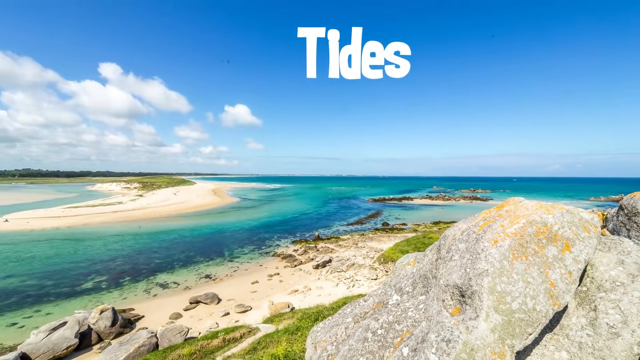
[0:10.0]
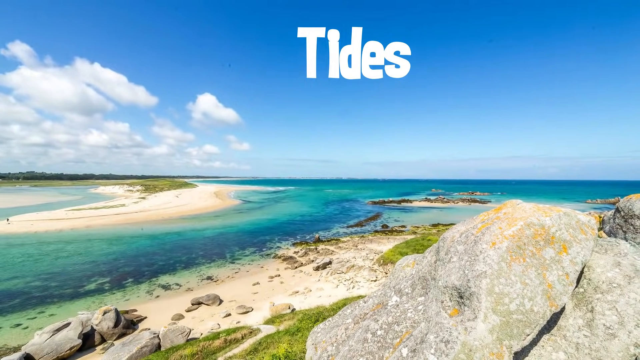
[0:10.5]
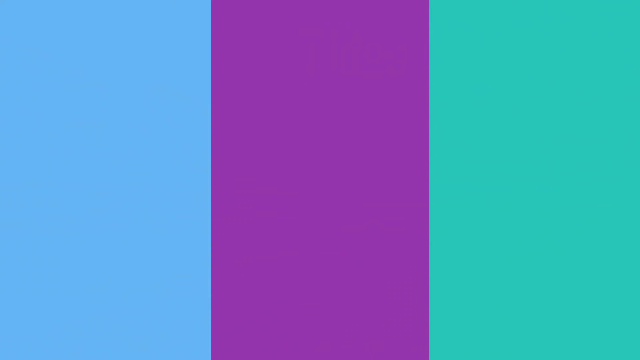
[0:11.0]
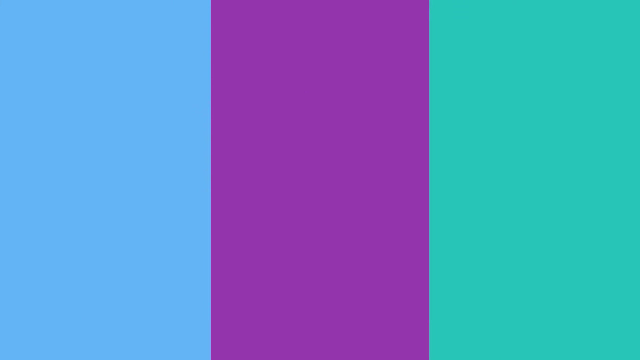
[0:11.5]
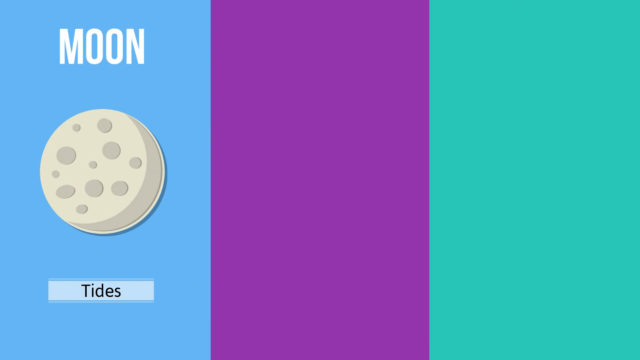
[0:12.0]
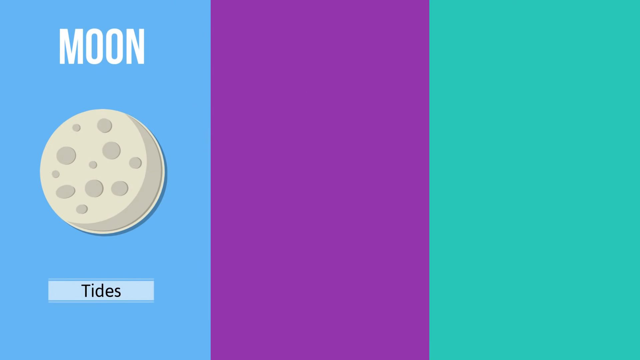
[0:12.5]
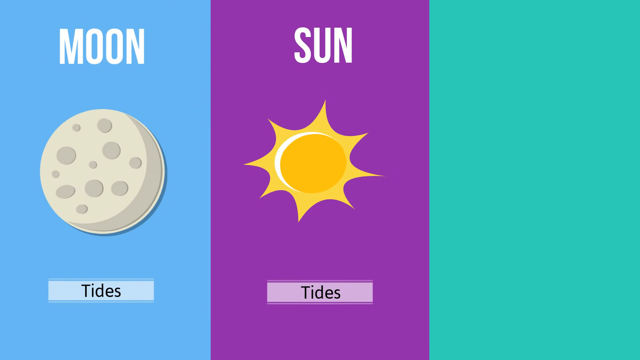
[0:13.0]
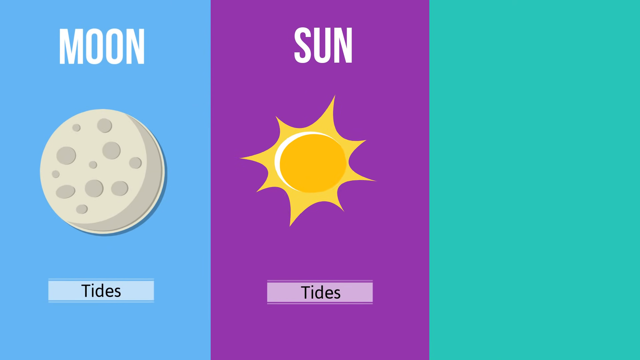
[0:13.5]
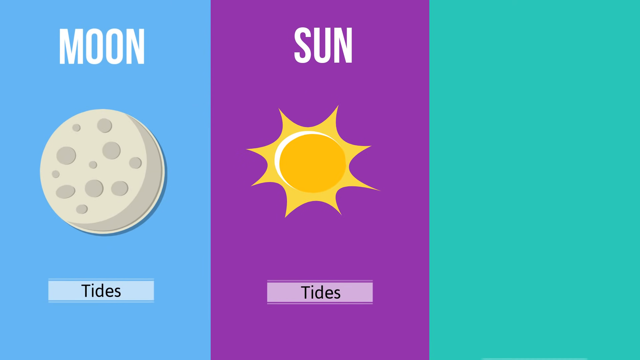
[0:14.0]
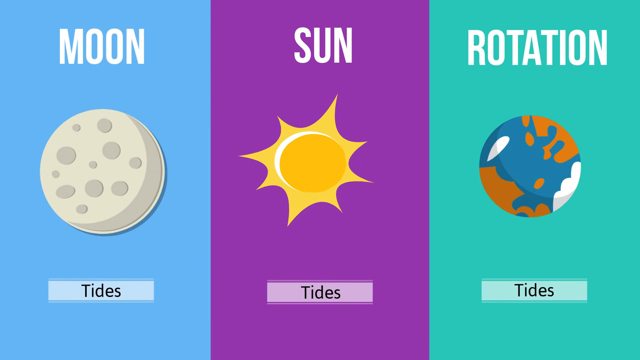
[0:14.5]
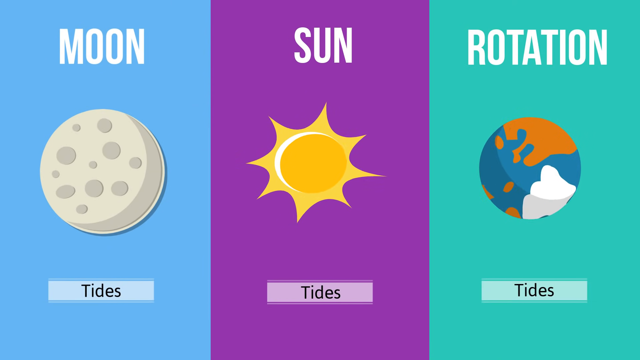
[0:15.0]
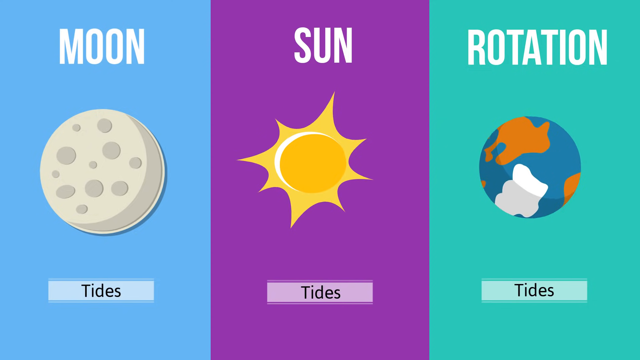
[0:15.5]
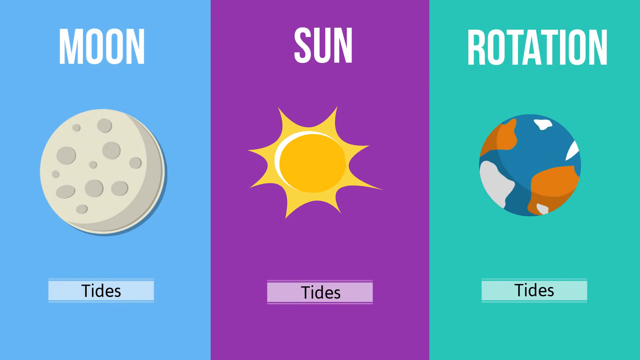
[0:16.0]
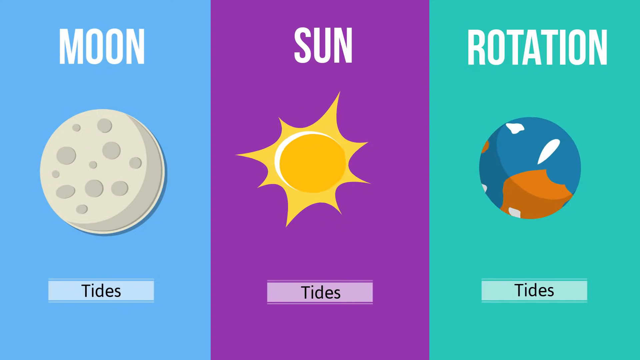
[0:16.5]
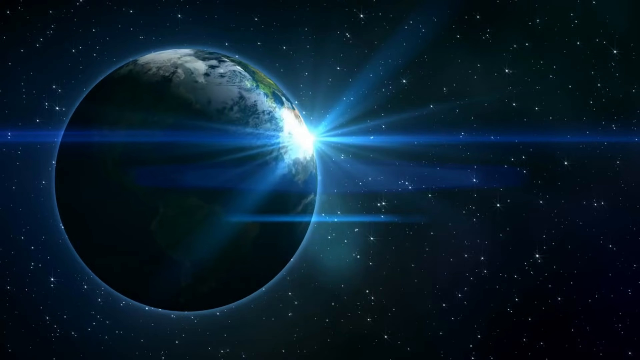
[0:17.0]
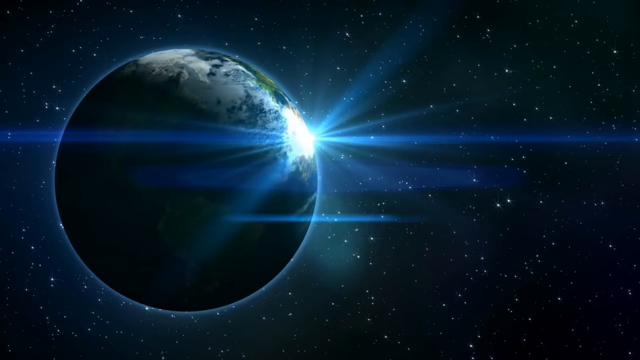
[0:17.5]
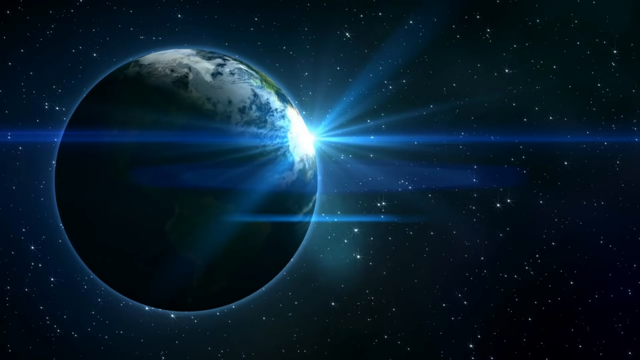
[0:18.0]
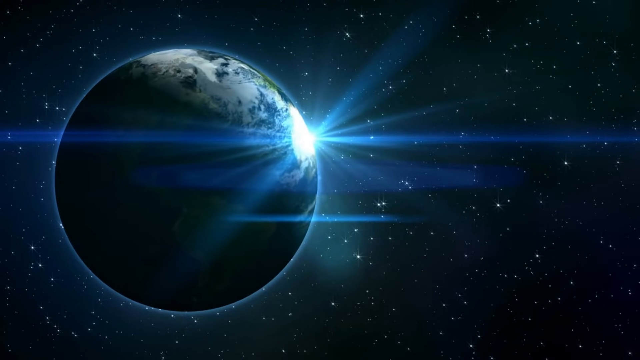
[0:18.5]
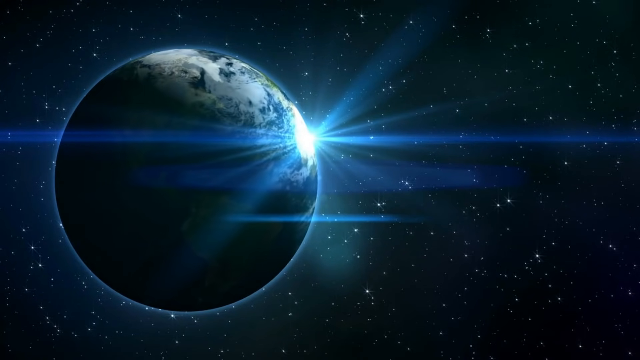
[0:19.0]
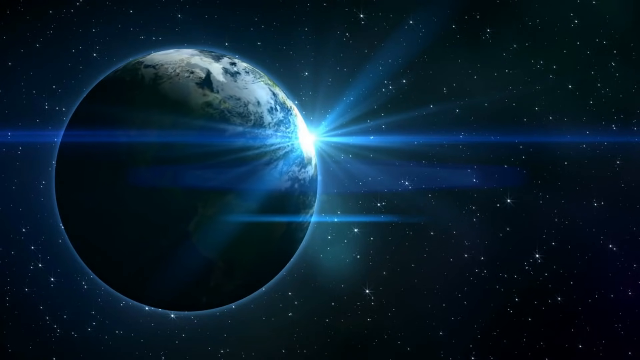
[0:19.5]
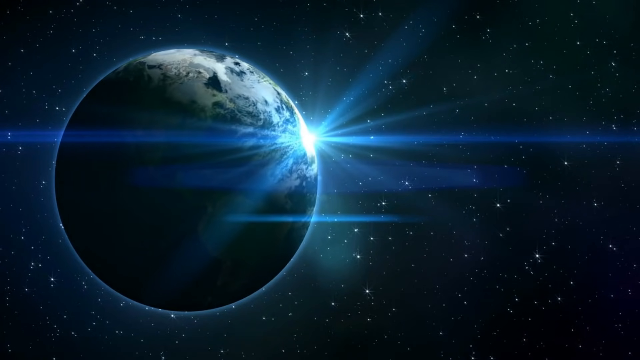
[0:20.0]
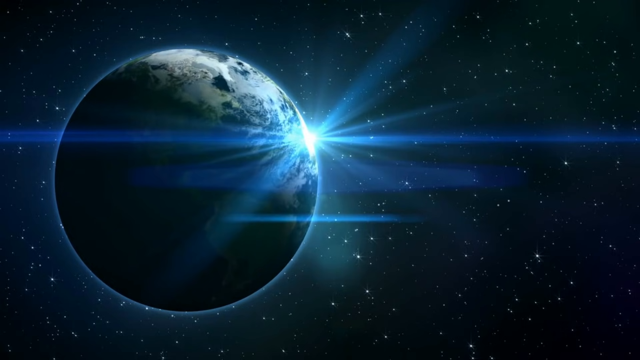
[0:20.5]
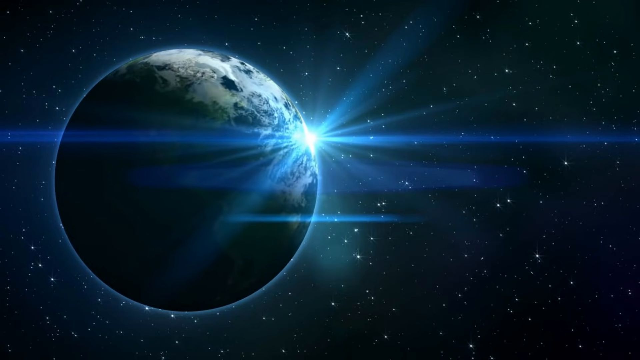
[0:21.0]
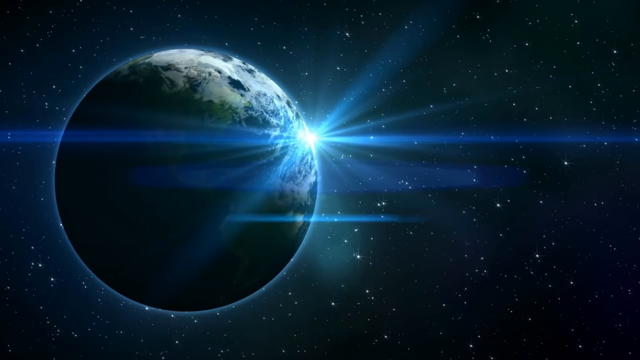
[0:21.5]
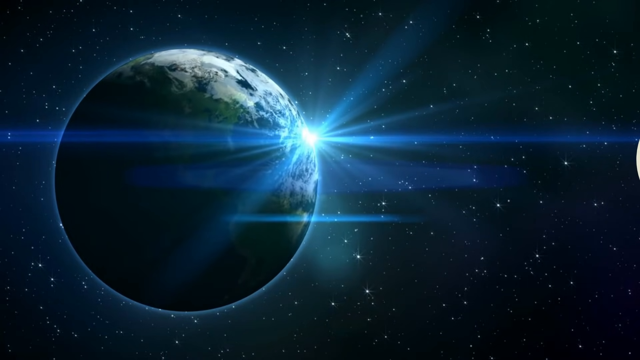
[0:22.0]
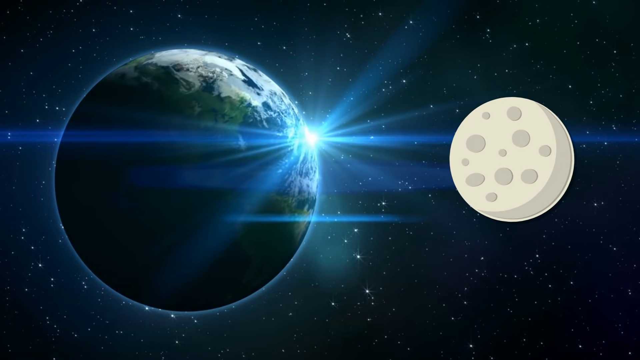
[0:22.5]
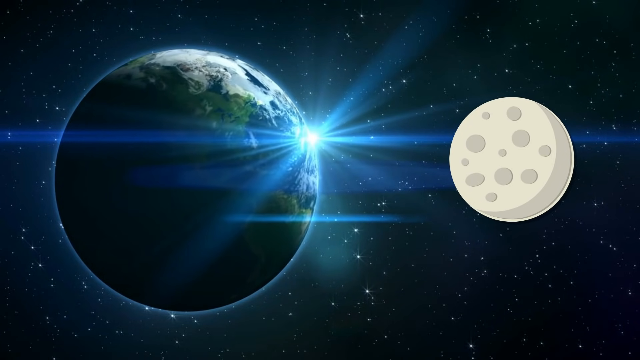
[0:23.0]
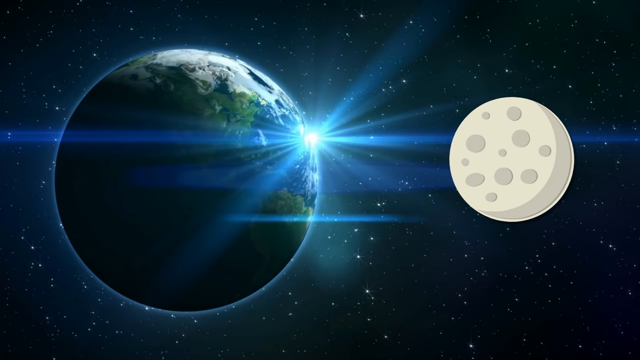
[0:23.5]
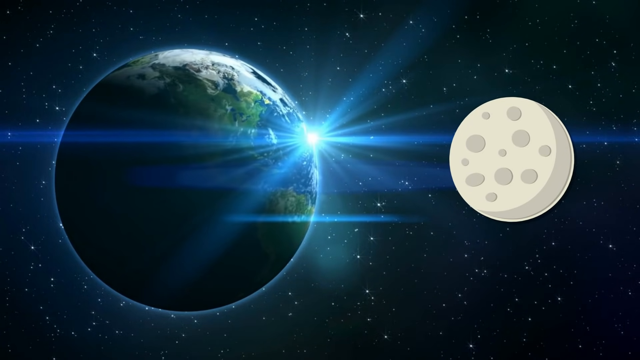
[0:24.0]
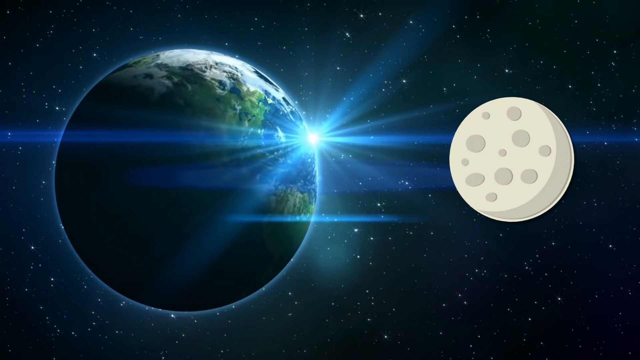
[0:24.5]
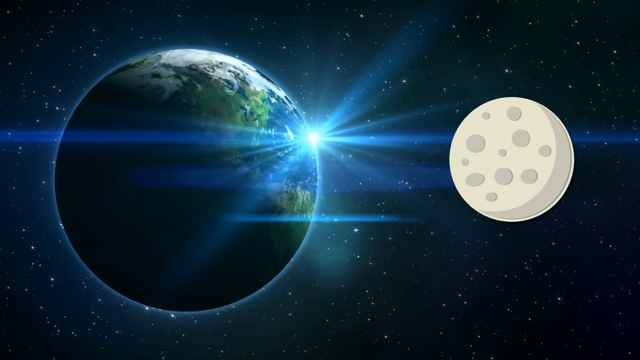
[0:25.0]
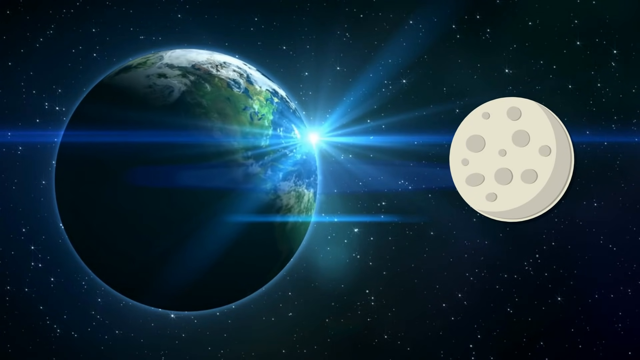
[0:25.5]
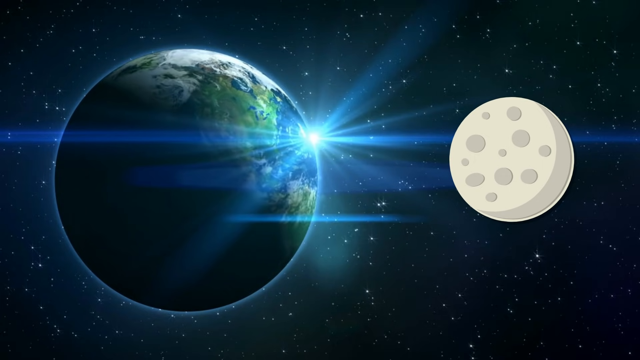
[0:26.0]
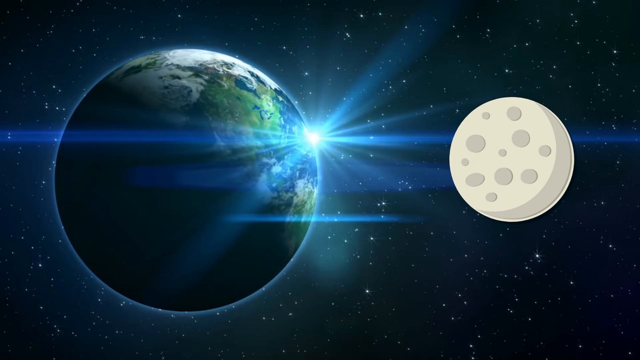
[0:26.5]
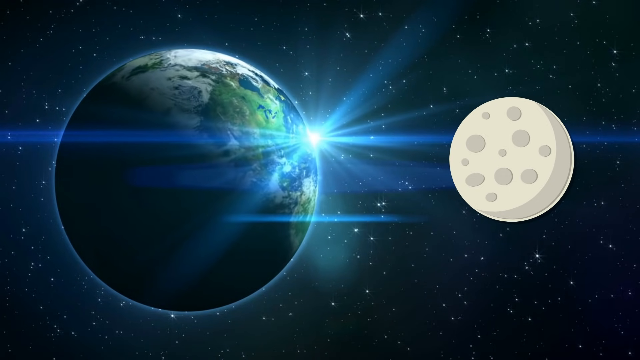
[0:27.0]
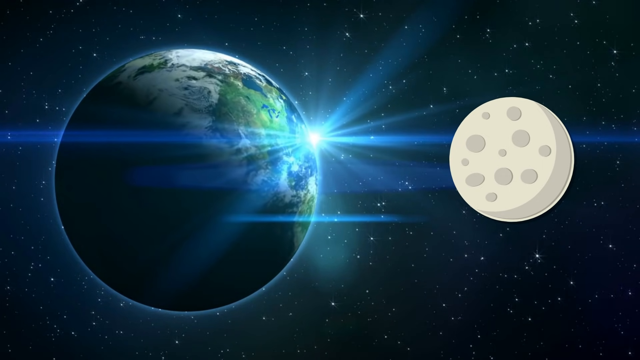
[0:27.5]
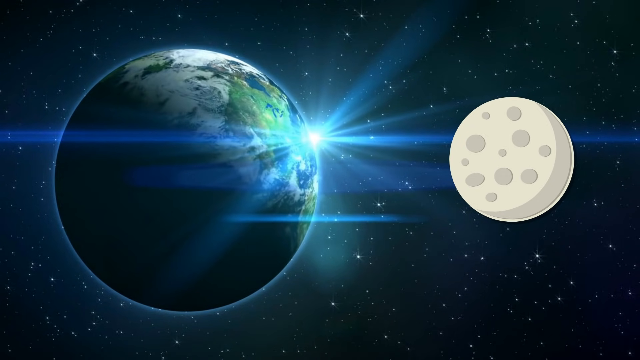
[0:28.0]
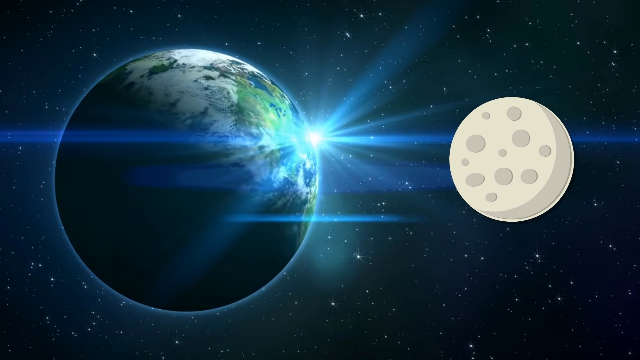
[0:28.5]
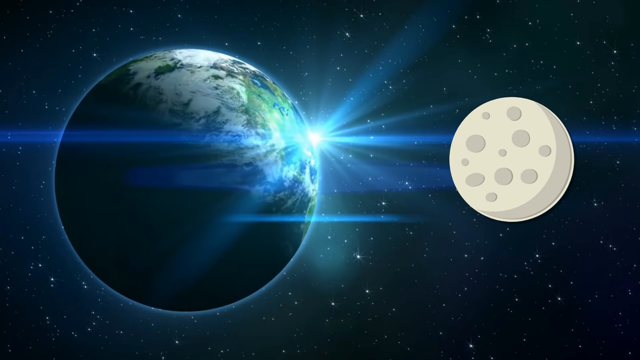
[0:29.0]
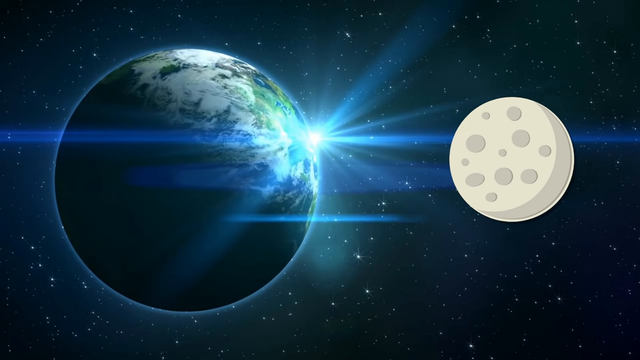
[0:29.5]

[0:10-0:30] The island and beach scenery continues. The scene then changes to three categories, each with an image of what it represents: on the left a picture of the moon with the title "moon" on top, in the middle a picture of the sun with the title "sun" on top, and on the right a picture of the earth with the title "rotation" on top. Under all three is the word "tides". The scene changes to the earth on the left side, very large and round, rotating to the right, with its left side very dark. In the background is outer space with a lot of small shining stars. The sun is in the distance to the right of the earth, shining at the earth's horizon and creating many light rays throughout outer space. An image of the moon comes in from the right side: a very basic, two-dimensional picture of the moon, light gray with some circular crater marks.